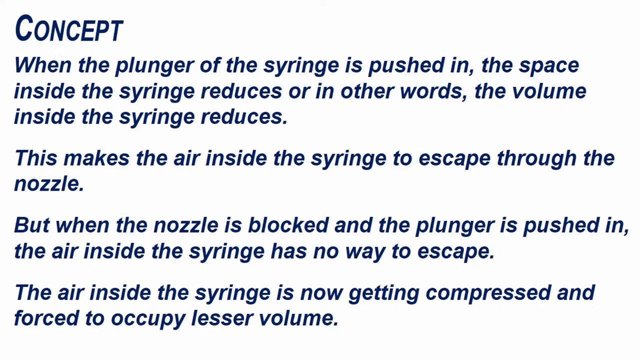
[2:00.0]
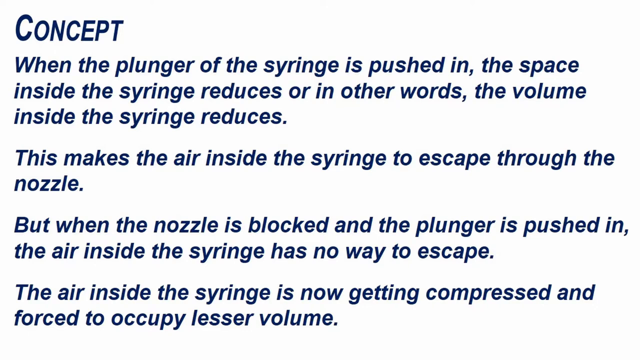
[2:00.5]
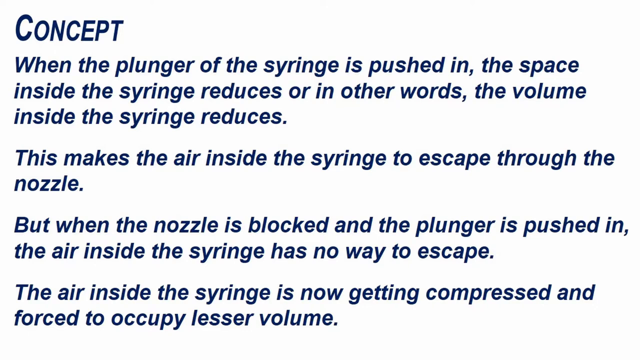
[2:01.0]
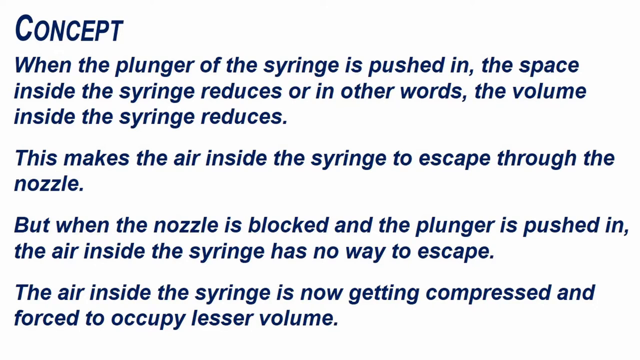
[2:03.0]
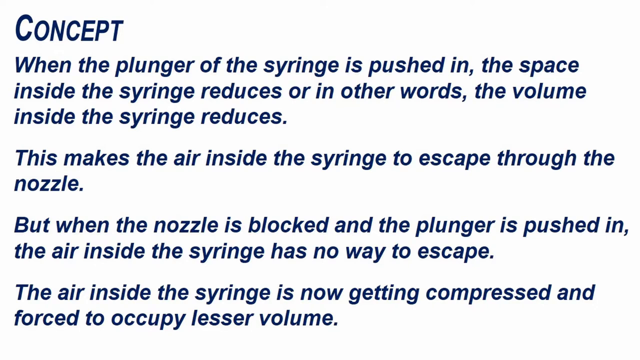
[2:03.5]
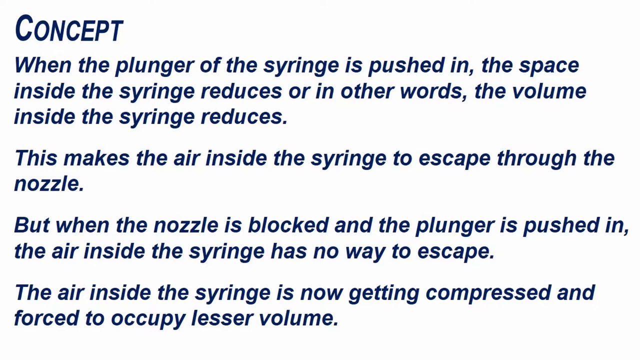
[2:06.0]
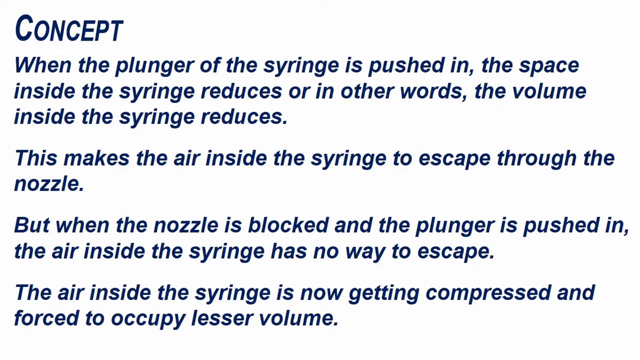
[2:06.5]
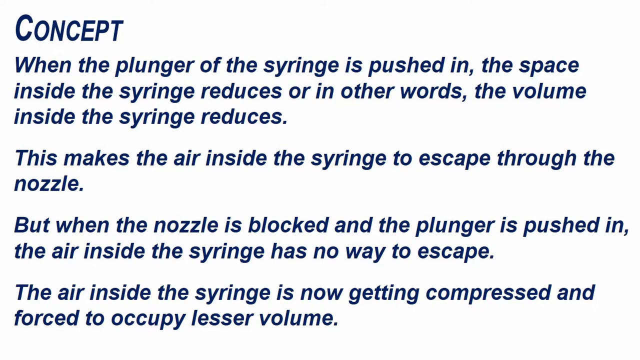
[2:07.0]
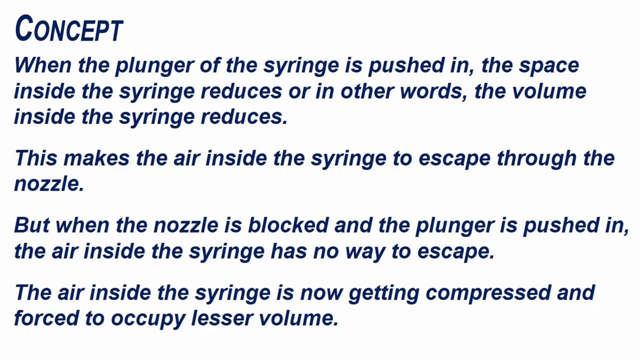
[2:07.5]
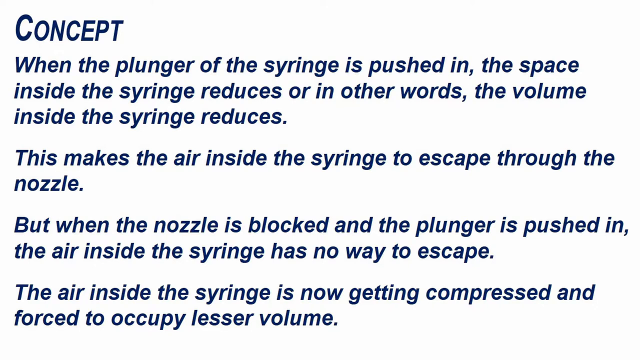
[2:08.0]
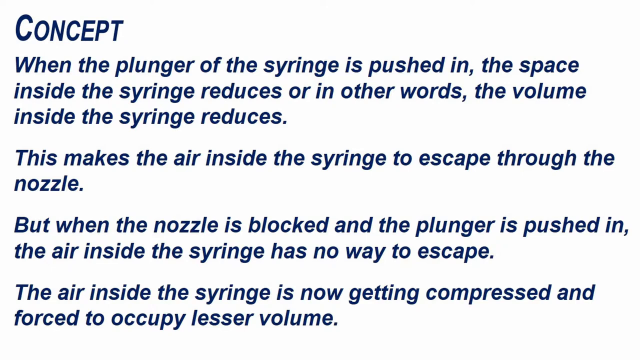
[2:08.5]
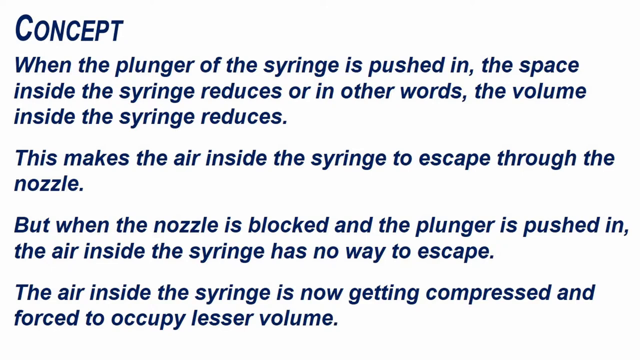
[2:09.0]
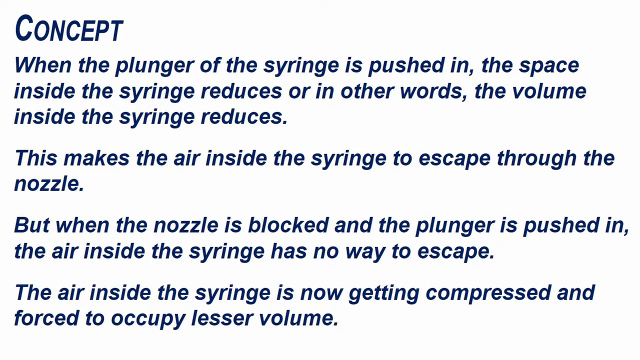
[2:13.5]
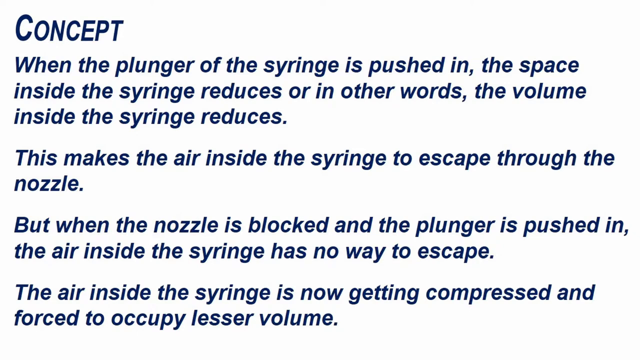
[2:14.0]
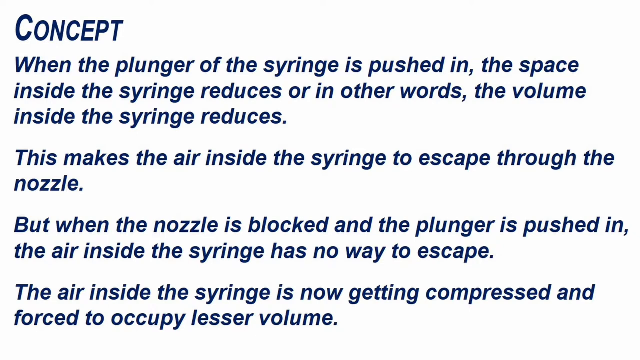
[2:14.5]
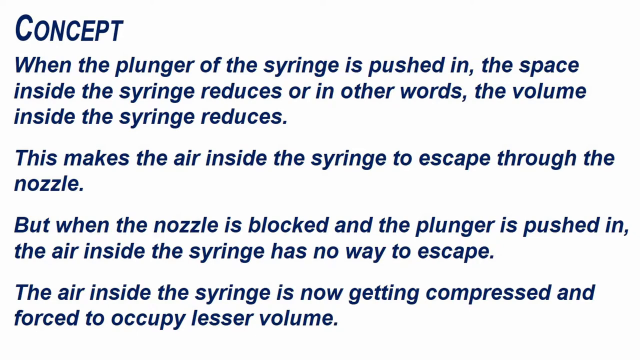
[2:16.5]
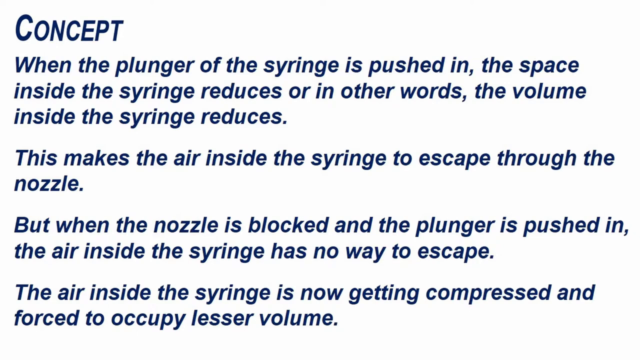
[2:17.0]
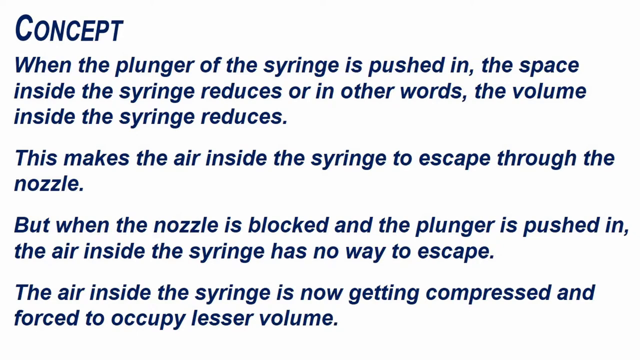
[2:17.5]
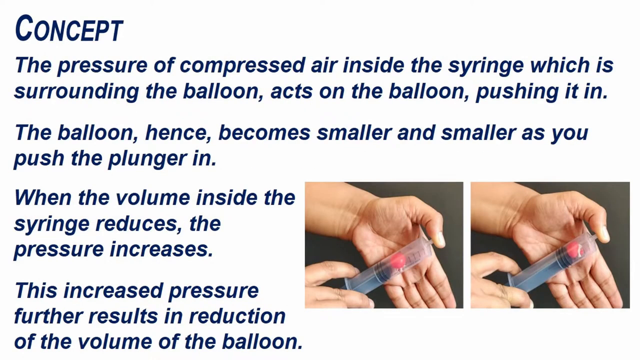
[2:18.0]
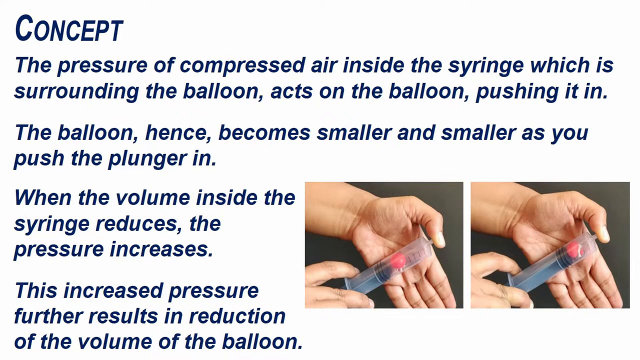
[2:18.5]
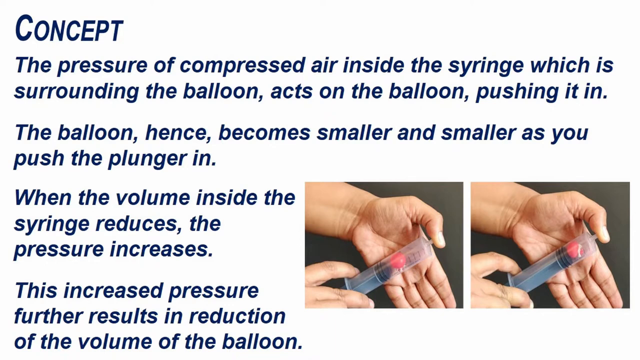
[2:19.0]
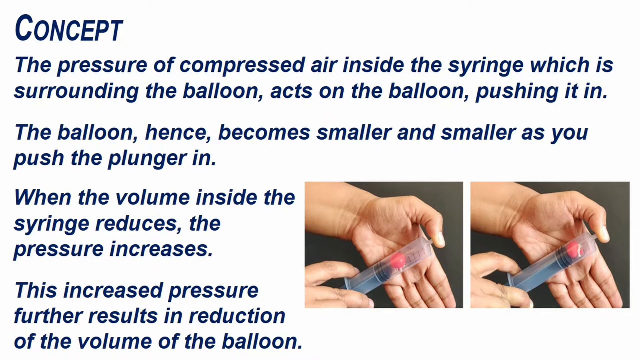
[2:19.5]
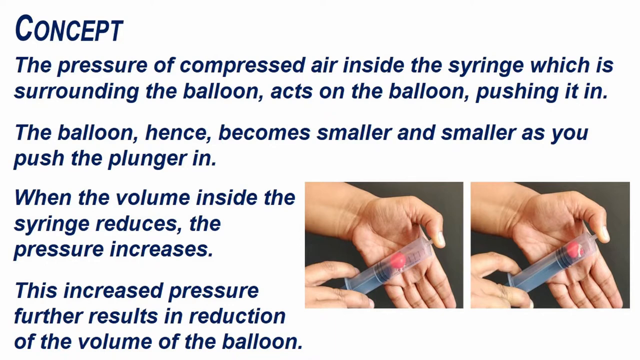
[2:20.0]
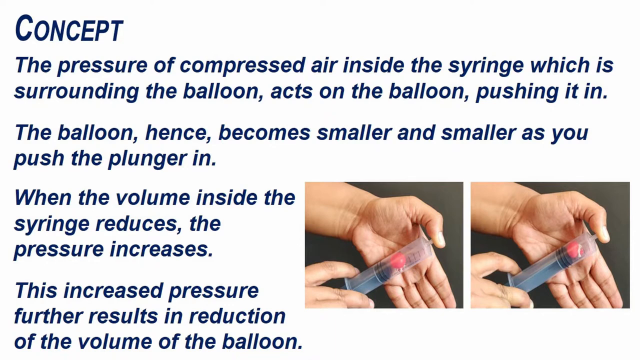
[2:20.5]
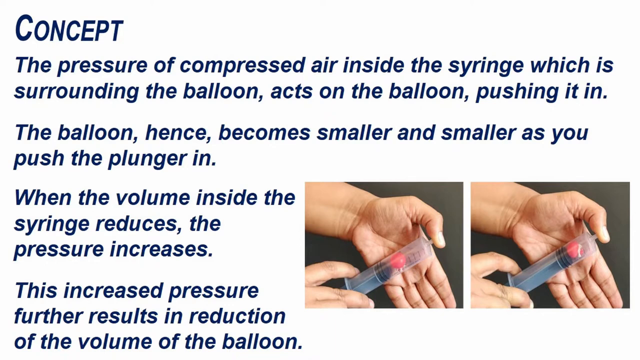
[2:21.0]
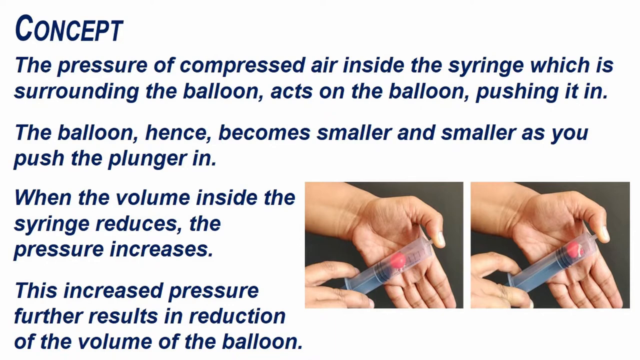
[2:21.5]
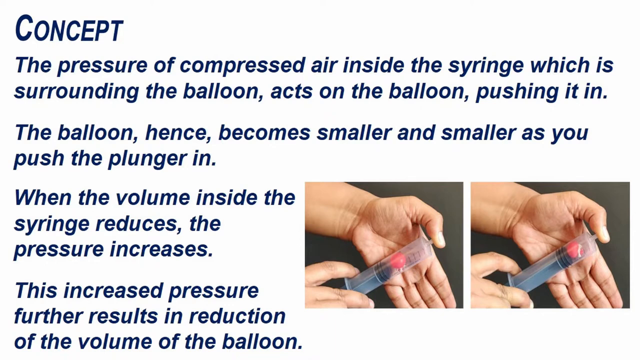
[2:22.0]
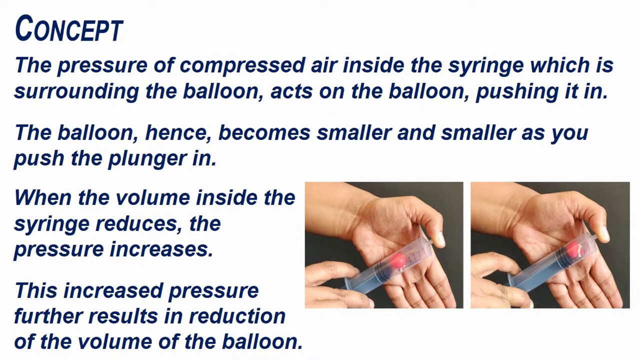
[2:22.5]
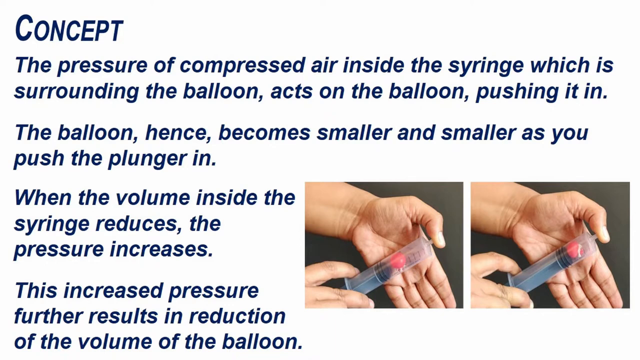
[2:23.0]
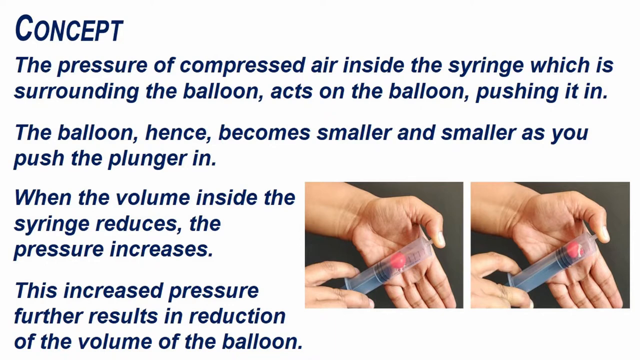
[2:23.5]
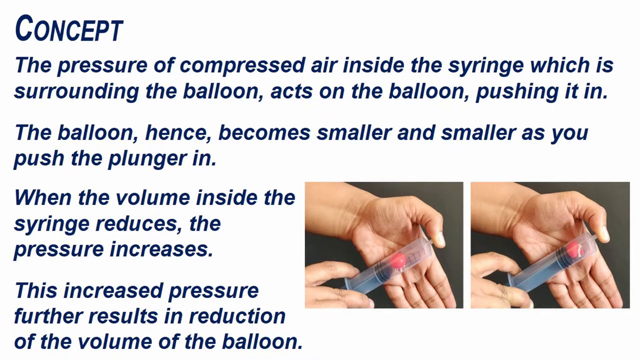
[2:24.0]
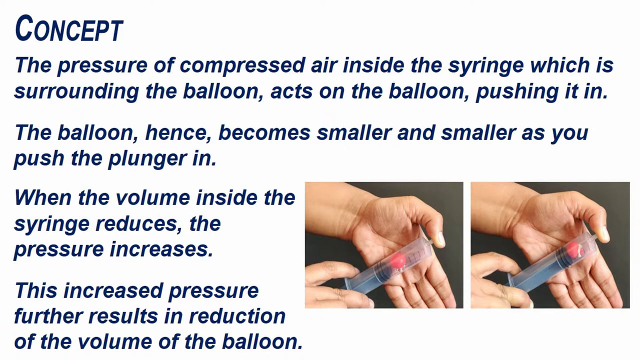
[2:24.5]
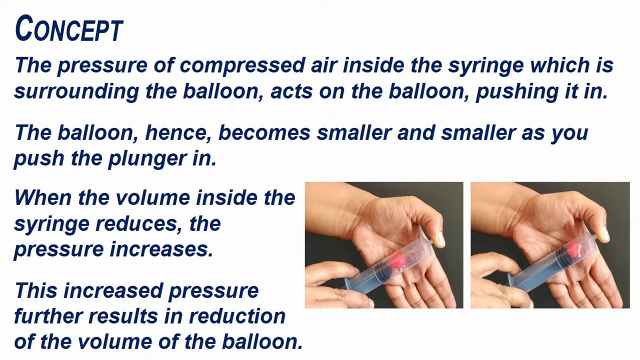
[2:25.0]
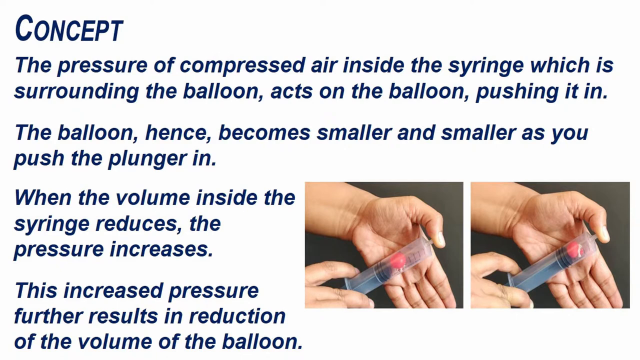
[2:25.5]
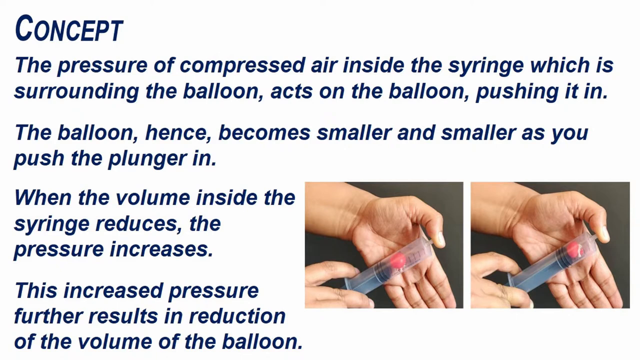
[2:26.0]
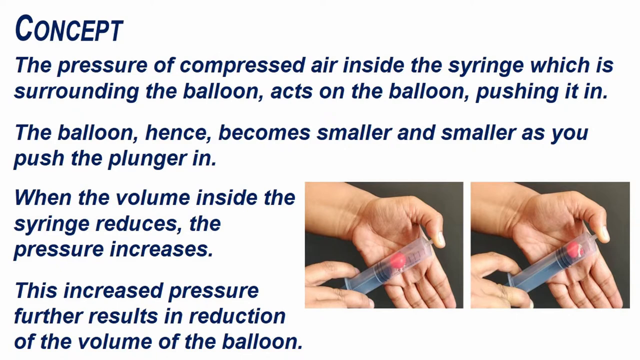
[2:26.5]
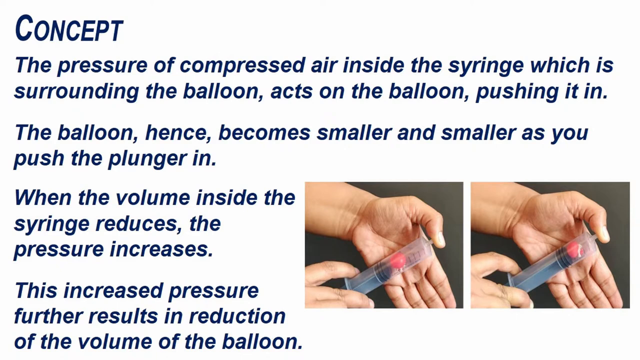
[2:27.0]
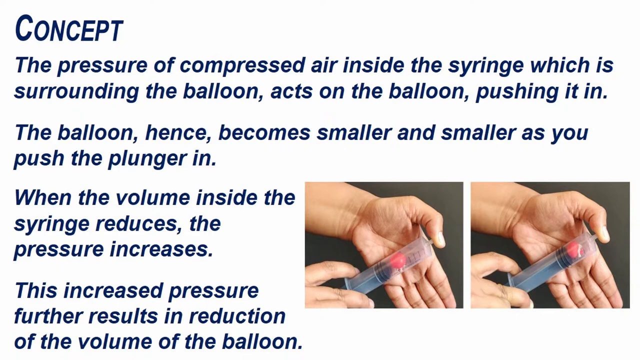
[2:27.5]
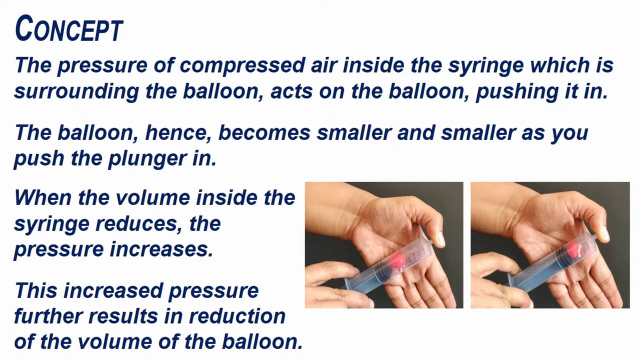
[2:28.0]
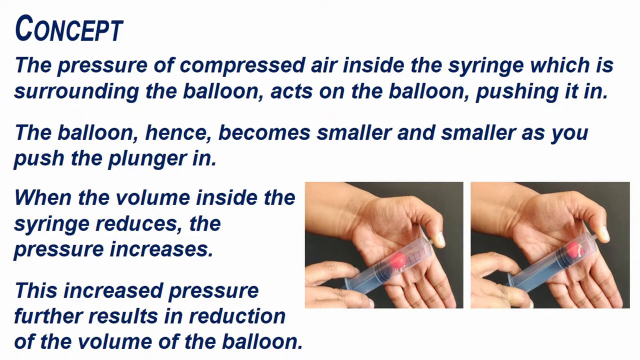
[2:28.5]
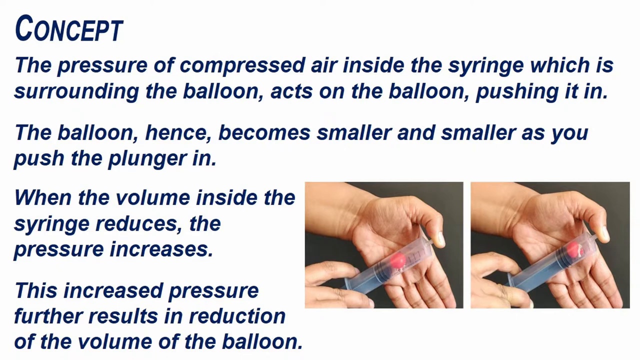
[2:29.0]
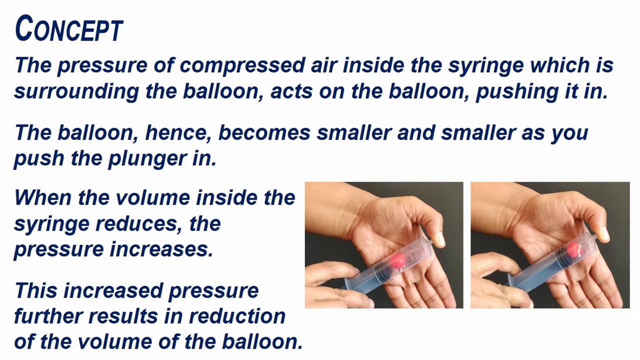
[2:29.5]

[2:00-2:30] The items needed for the experiment are shown: a clear 20 ml syringe, a red balloon, and a white thread. The balloon, inflated a little and tied with the white thread, is then shown with the clear syringe. The person takes the plunger out of the syringe, shows the red balloon, sets it inside the clear syringe, and closes it with the plunger. Pushing the plunger moves the red balloon up, and as it rises the balloon becomes smaller and smaller. At some point the person can no longer push the plunger up, and the plunger goes down by itself, with the syringe's nozzle closed, leaving the balloon in the middle of the syringe. Boyle's law is then presented, and viewers are encouraged to try this at home.